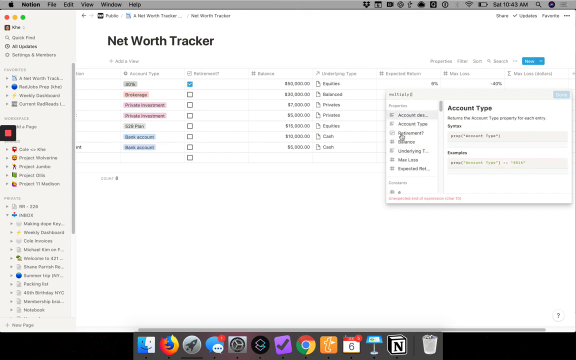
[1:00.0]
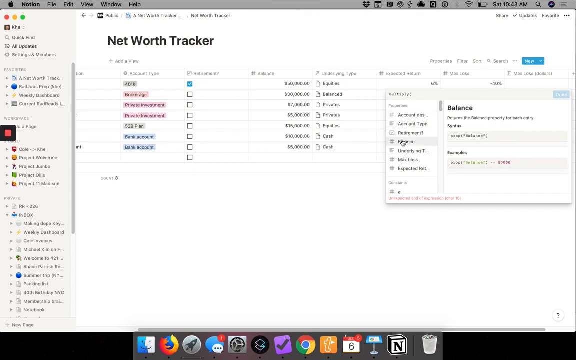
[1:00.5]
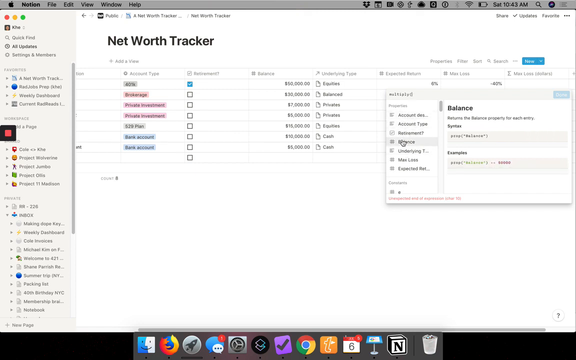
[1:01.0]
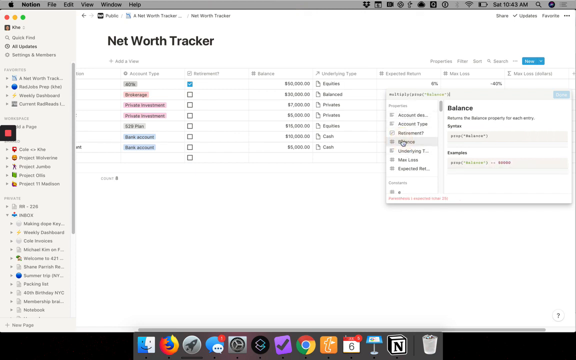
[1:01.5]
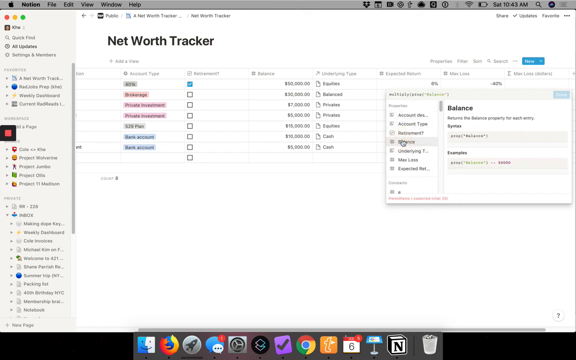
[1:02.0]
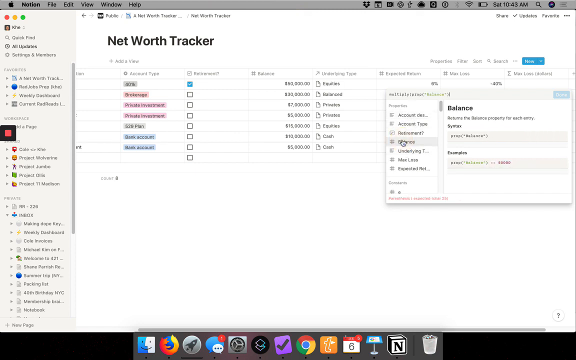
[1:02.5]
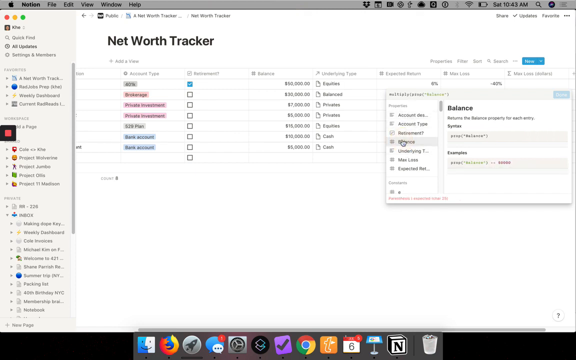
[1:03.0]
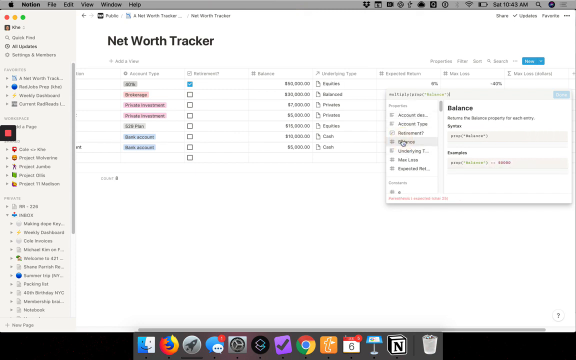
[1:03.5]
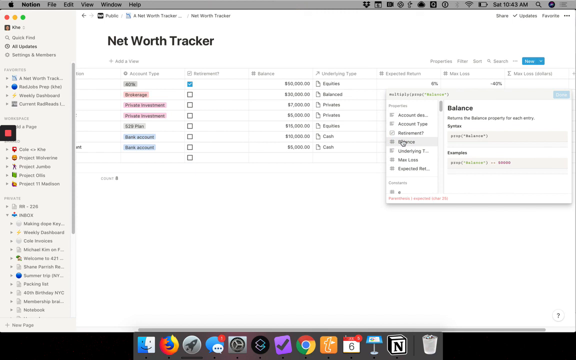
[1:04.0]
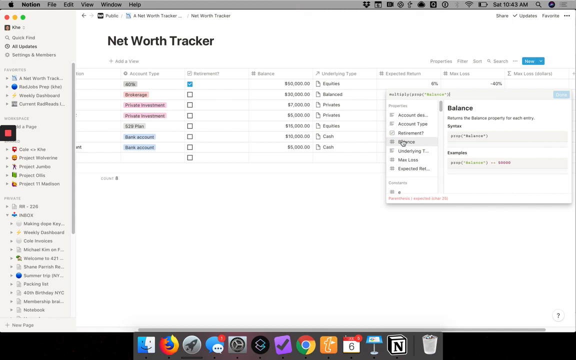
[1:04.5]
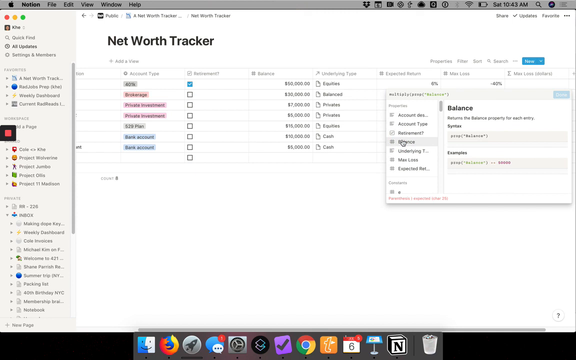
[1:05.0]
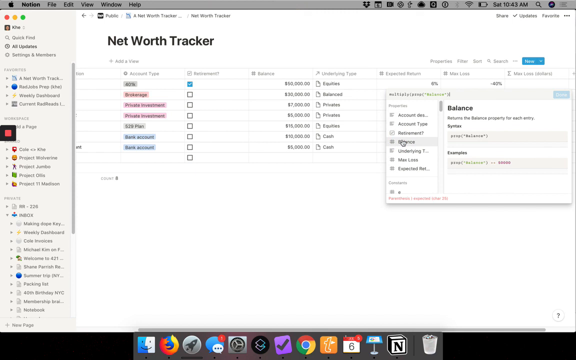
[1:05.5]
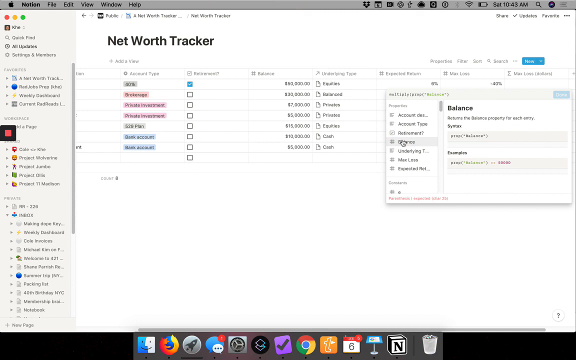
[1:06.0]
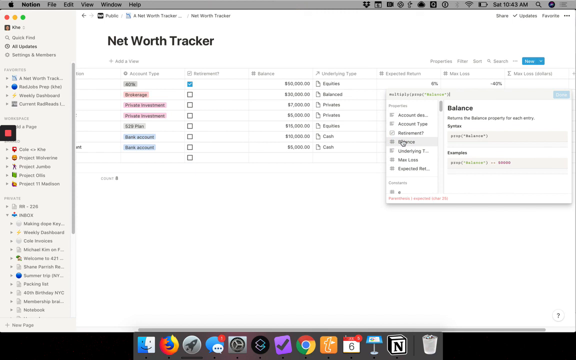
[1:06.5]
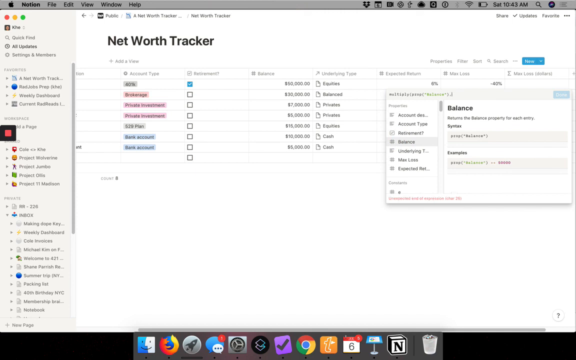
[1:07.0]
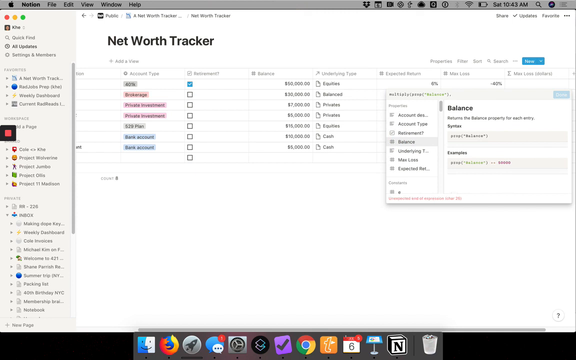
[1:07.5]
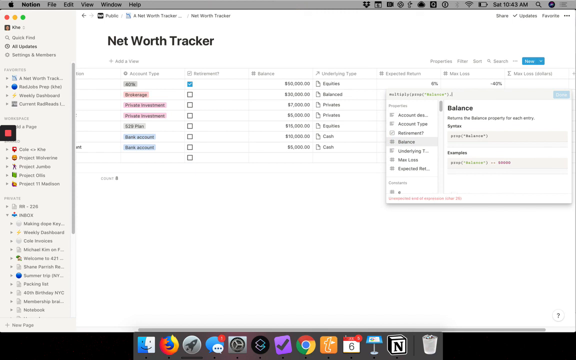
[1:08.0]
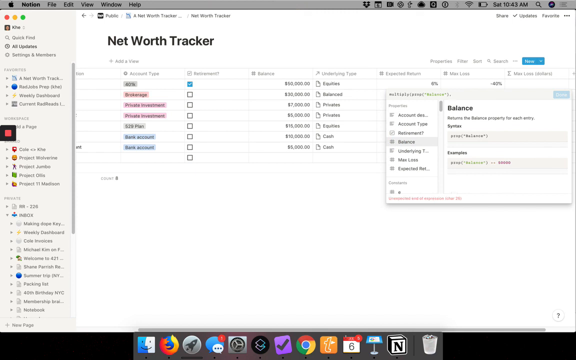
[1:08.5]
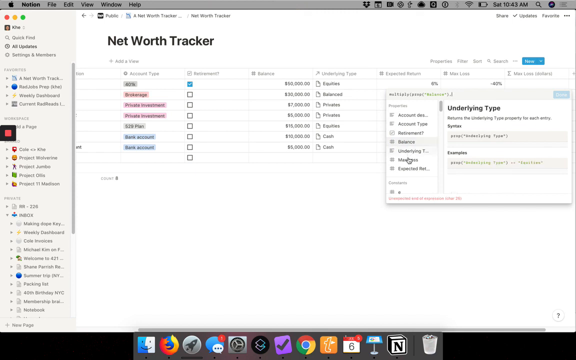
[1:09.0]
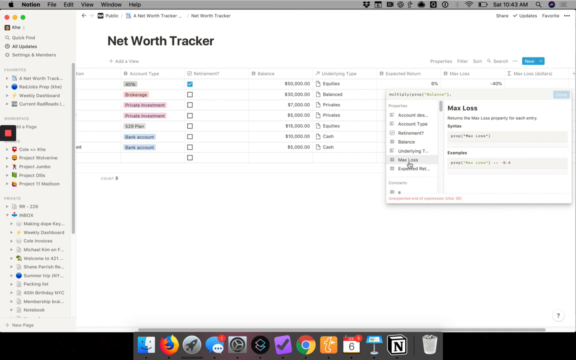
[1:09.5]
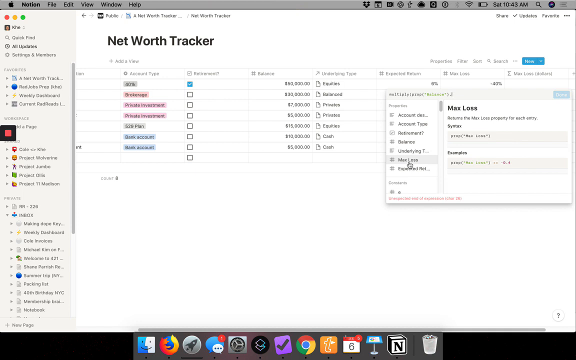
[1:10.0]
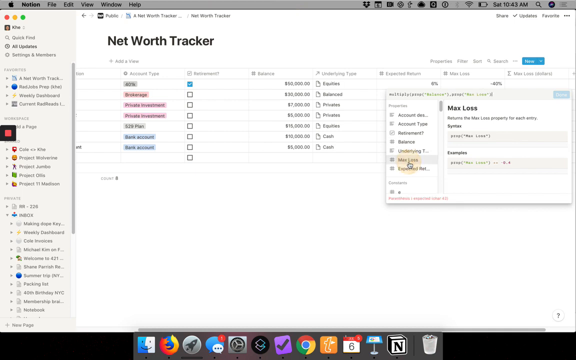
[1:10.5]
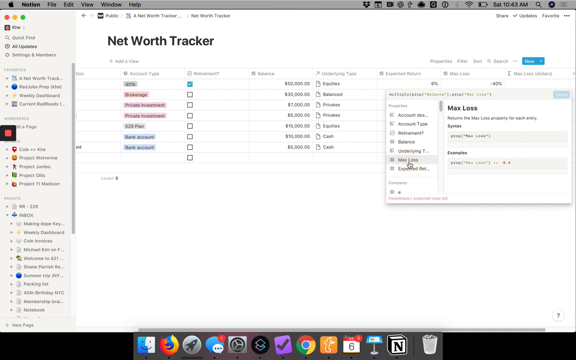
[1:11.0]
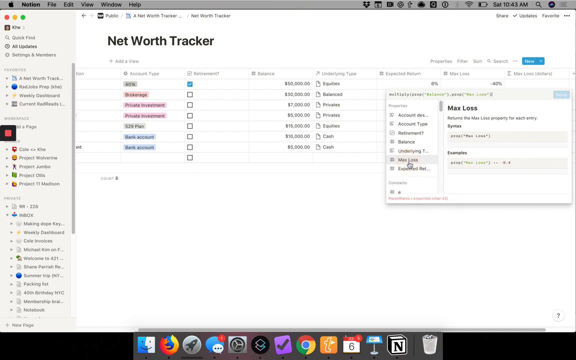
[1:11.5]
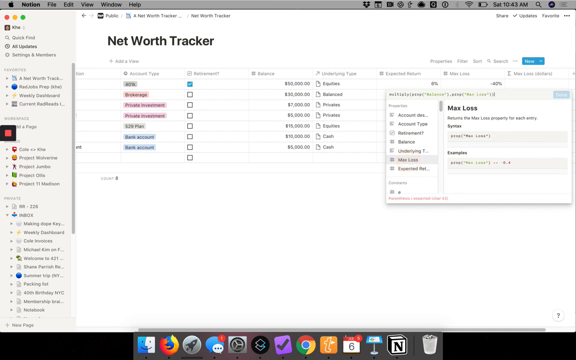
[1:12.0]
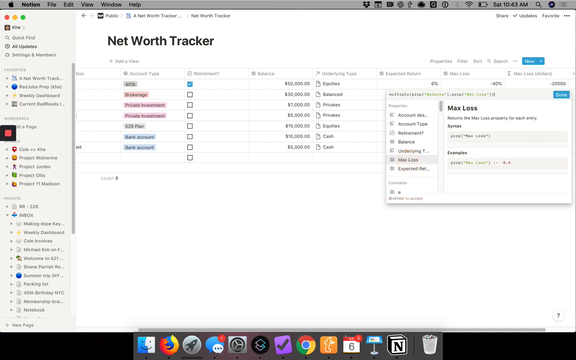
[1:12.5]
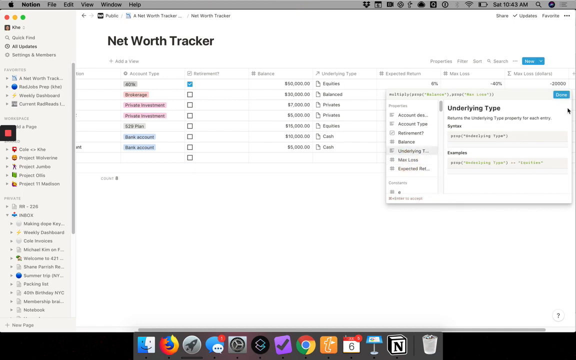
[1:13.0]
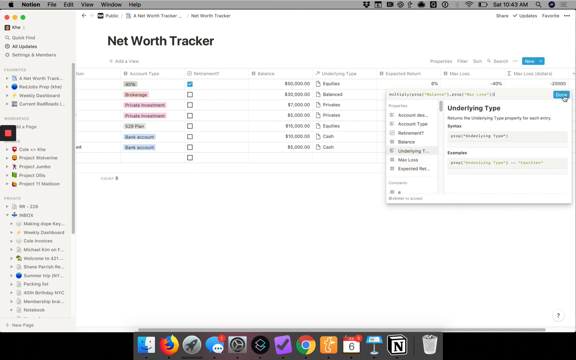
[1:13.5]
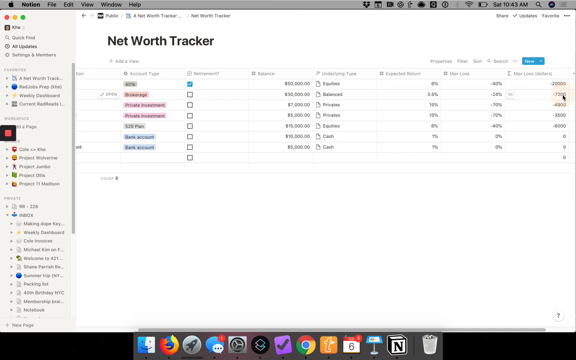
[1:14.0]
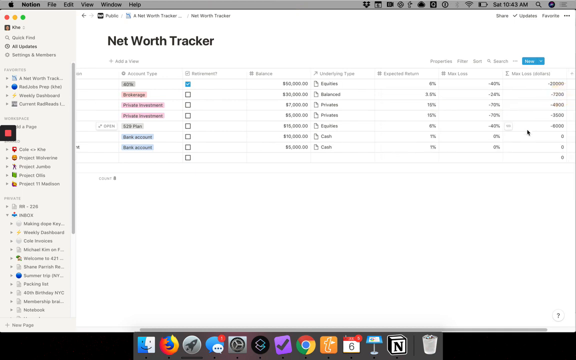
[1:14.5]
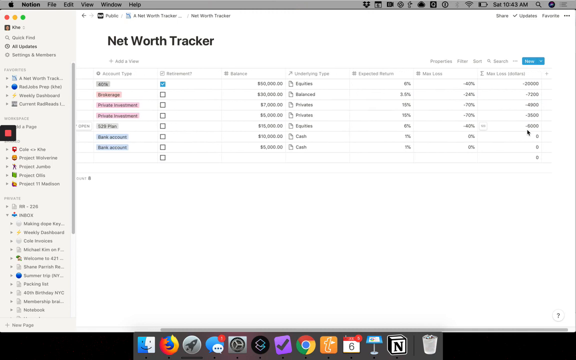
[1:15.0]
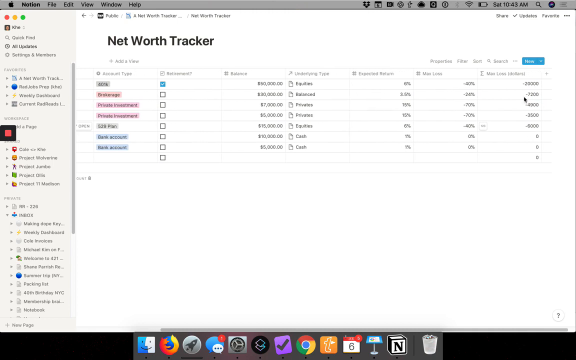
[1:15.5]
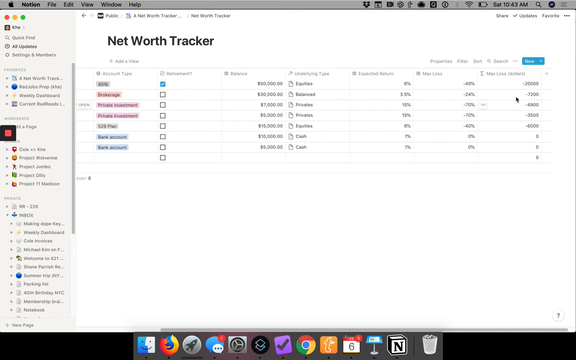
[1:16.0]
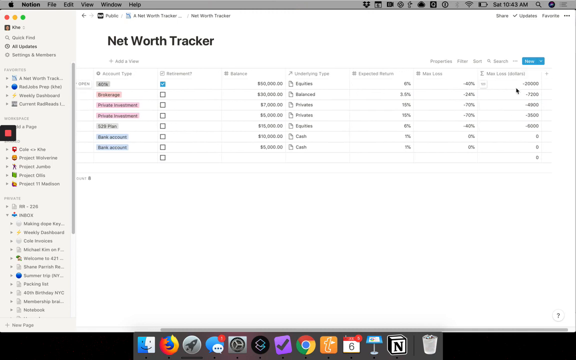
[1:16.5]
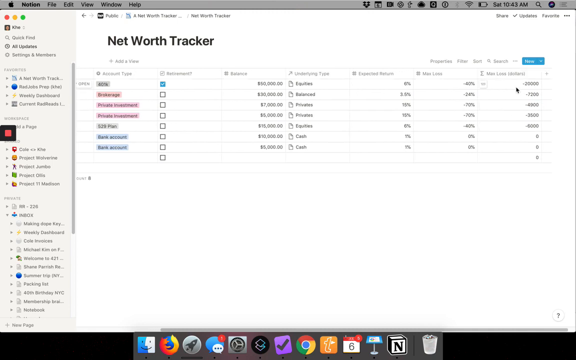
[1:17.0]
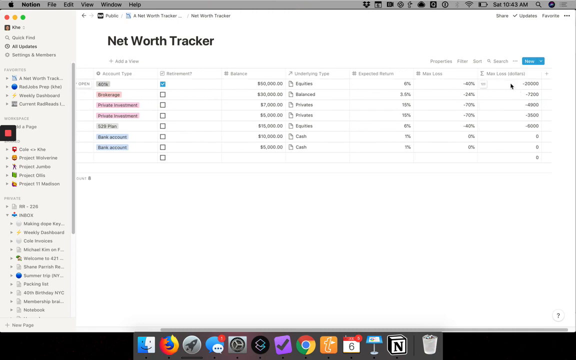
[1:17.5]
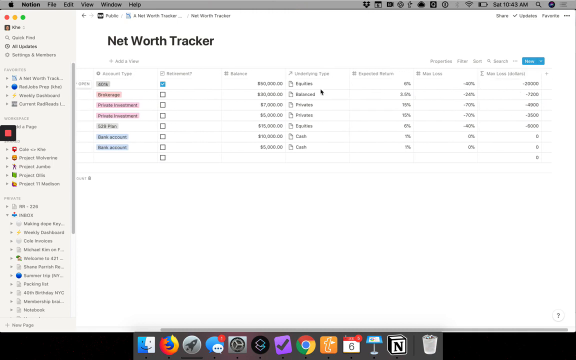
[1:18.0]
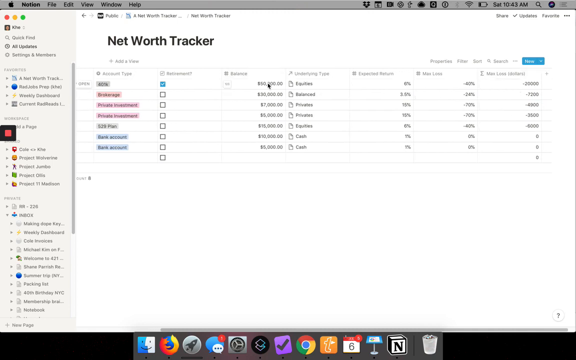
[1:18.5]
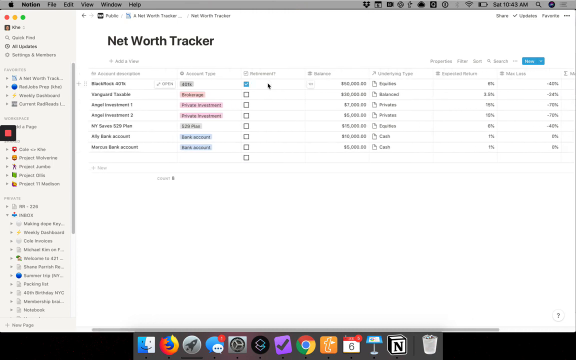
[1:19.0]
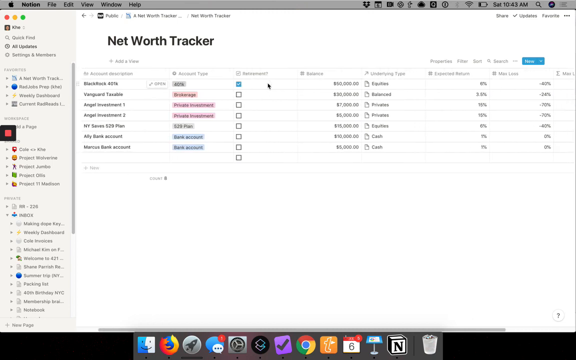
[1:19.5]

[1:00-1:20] A computer screen shows a program on an Apple computer, with an Apple logo in the upper left corner. The white backdrop has a lot of lettering, including "Net Worth Tracker," and several columns of typed words that are highlighted, with checkmark boxes. On the right side, the mouse is inside a small square box, clicking on words in the box; each click makes a bright orange-yellow circle flash. The box eventually goes away, and the mouse scrolls over to the right side of the page, apparently trying to select certain items. Suddenly the small box on the right comes back, and the user goes down a column of words, selecting different words until reaching "max loss." They click a blue box to execute, and the view returns to the page, where they scroll left and right.